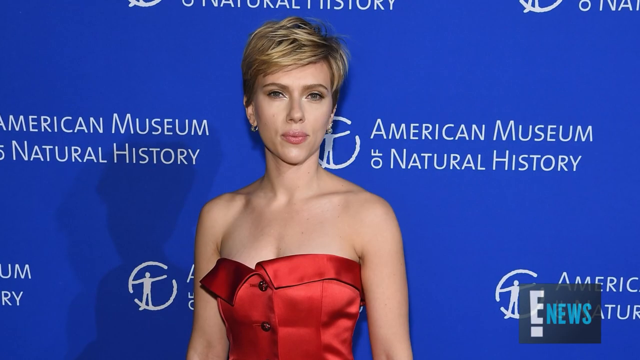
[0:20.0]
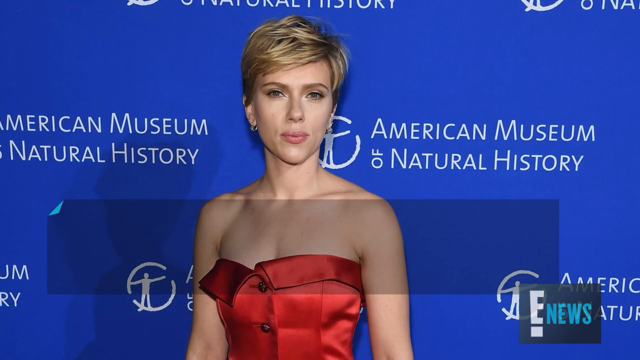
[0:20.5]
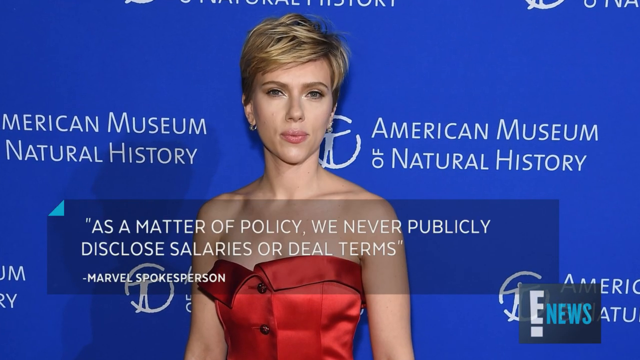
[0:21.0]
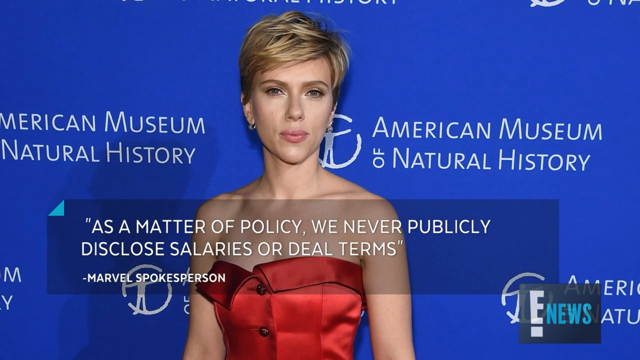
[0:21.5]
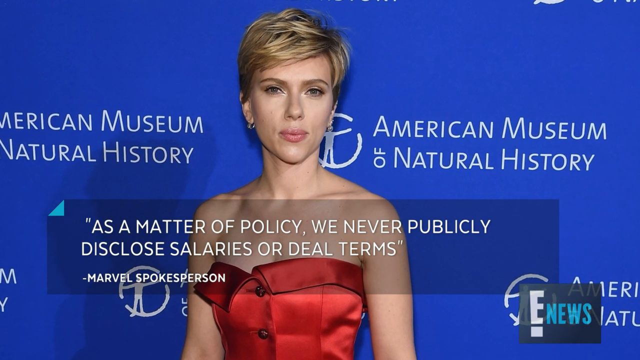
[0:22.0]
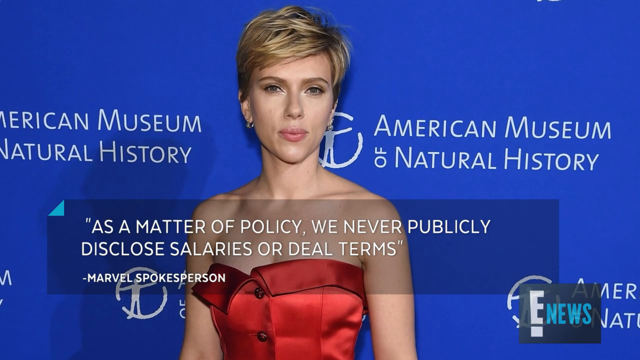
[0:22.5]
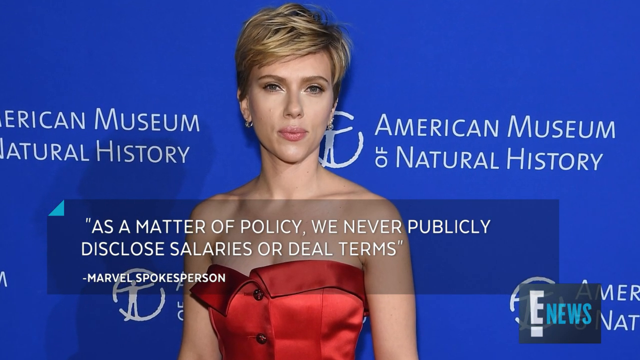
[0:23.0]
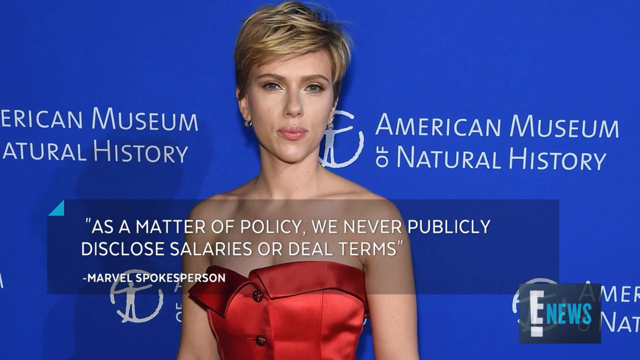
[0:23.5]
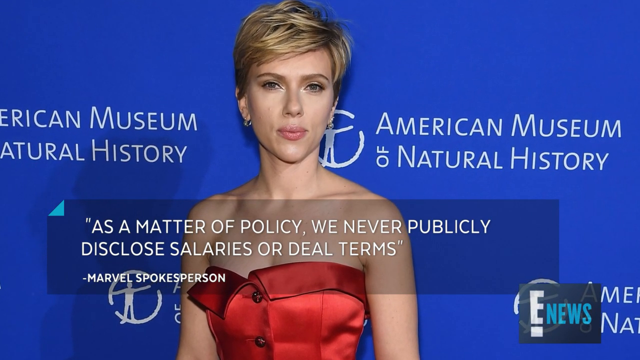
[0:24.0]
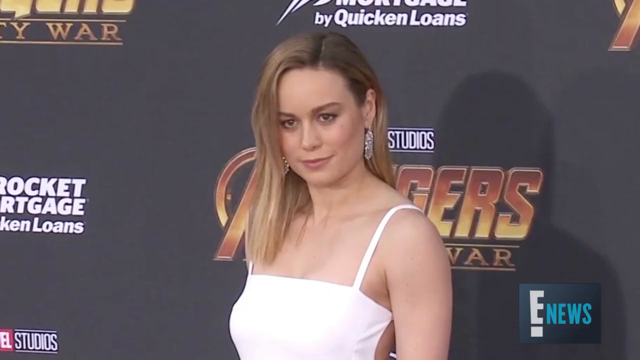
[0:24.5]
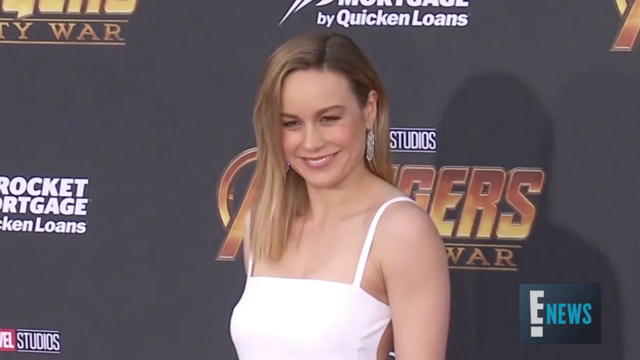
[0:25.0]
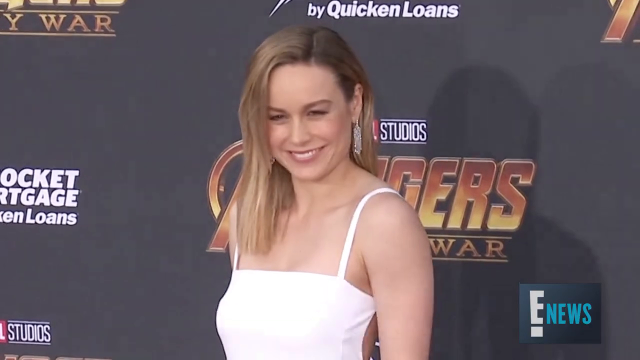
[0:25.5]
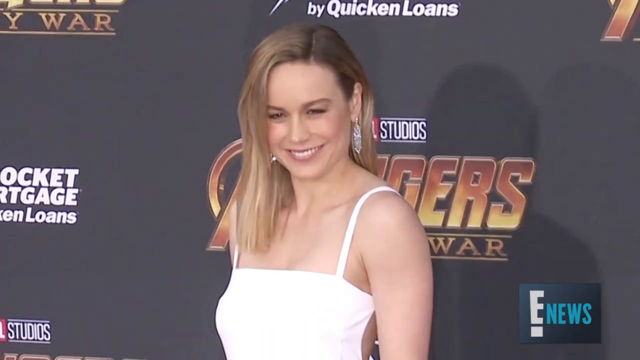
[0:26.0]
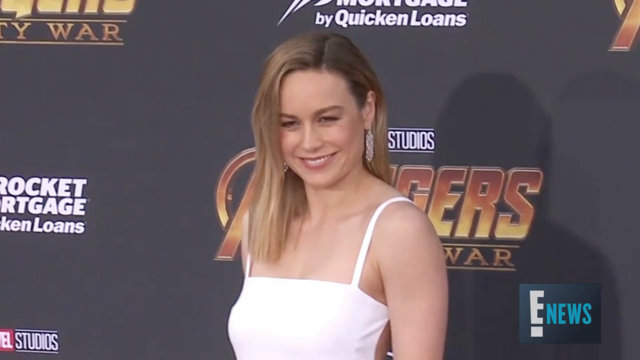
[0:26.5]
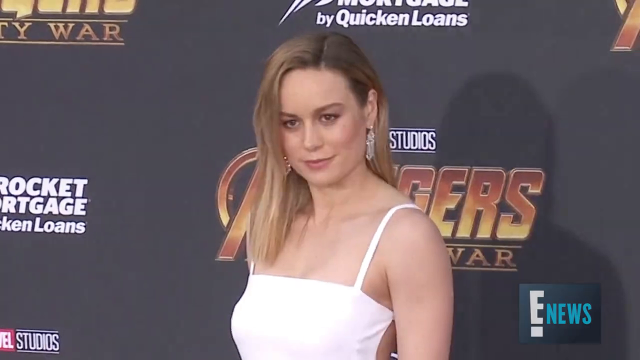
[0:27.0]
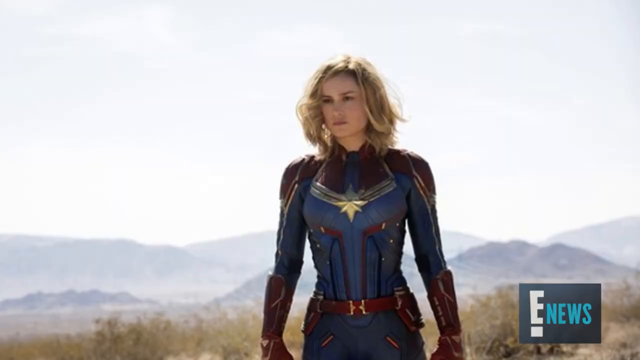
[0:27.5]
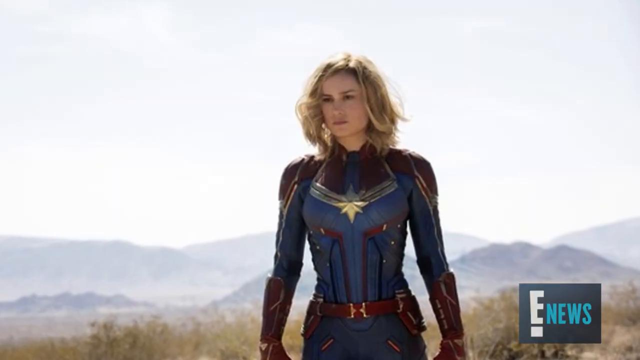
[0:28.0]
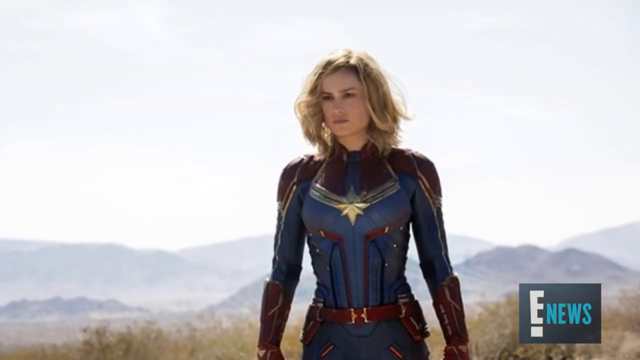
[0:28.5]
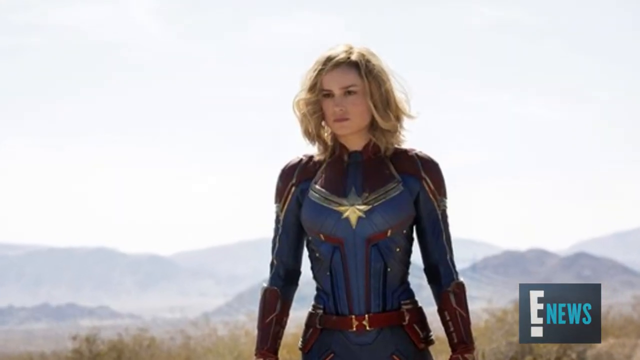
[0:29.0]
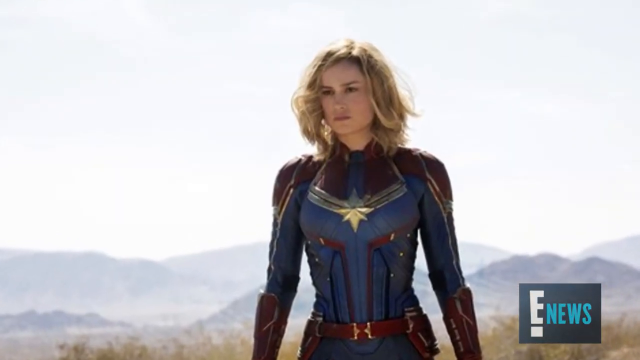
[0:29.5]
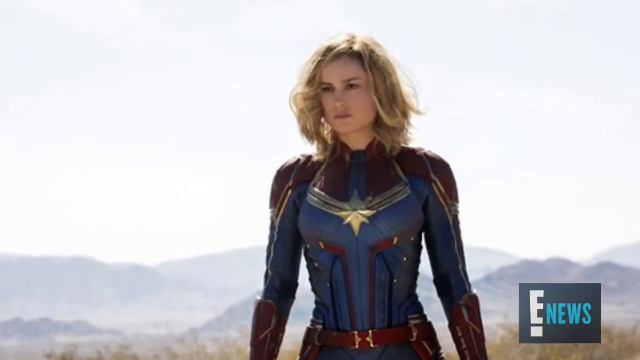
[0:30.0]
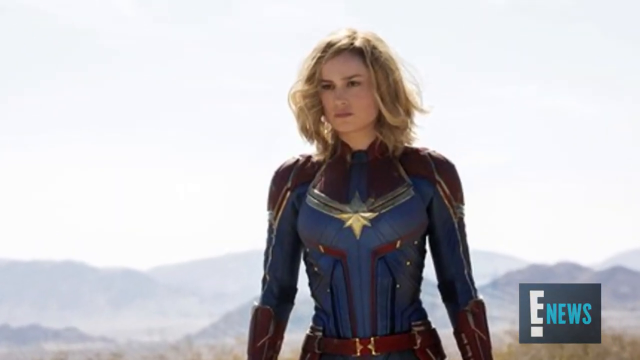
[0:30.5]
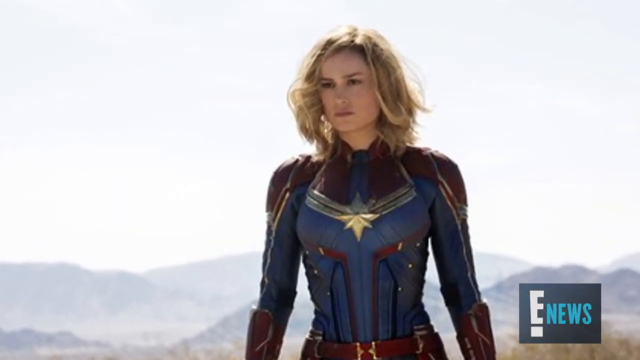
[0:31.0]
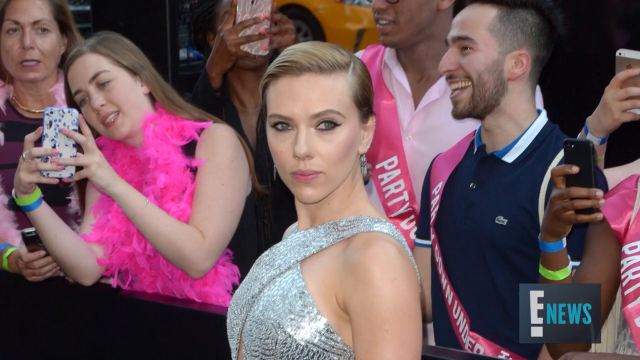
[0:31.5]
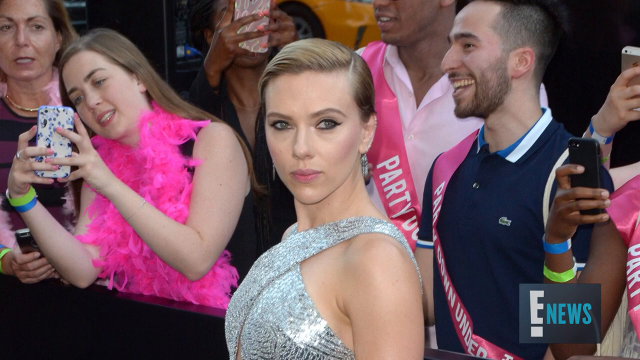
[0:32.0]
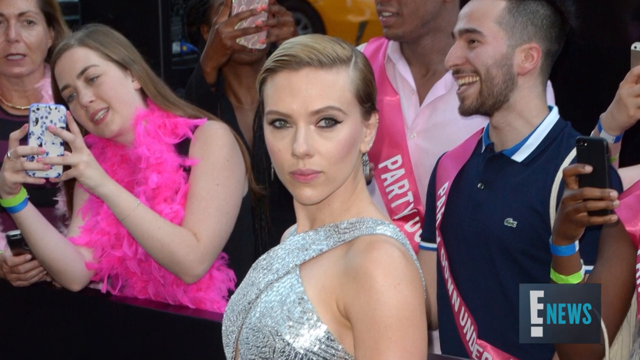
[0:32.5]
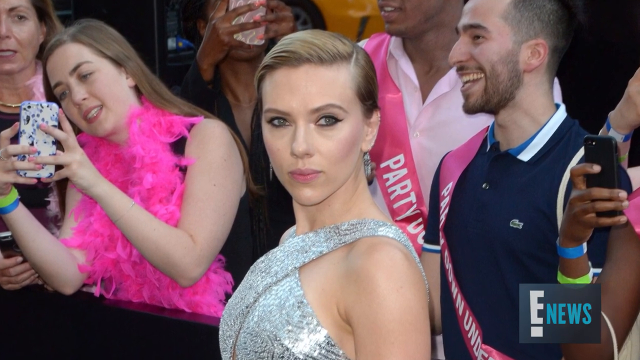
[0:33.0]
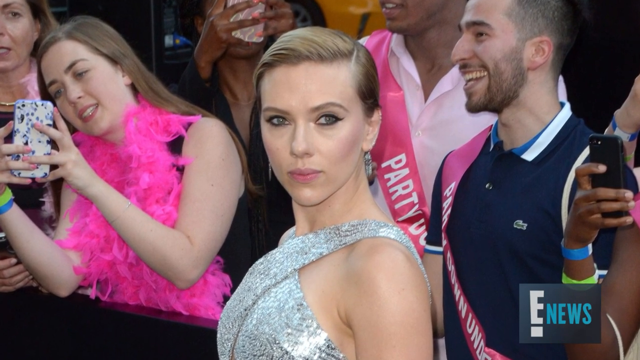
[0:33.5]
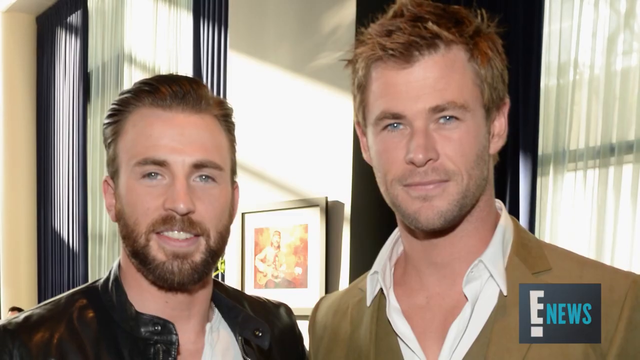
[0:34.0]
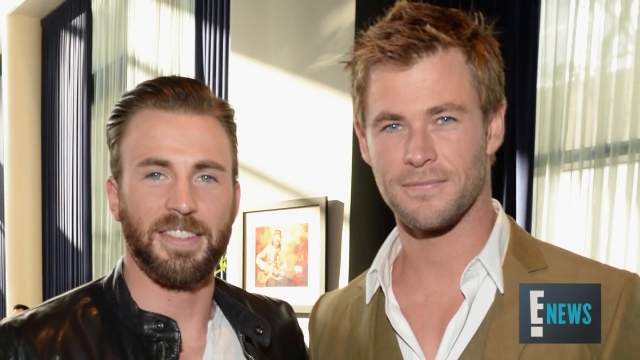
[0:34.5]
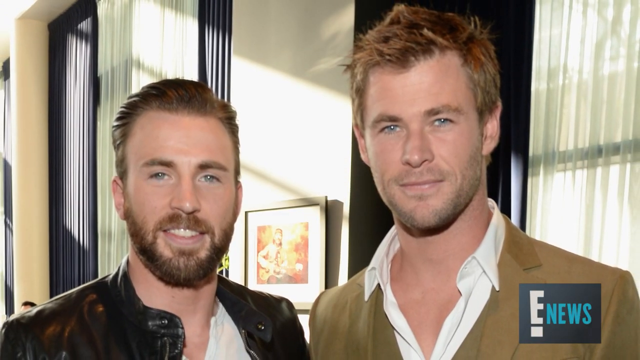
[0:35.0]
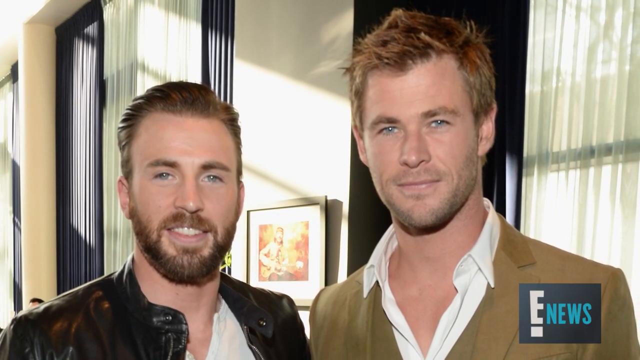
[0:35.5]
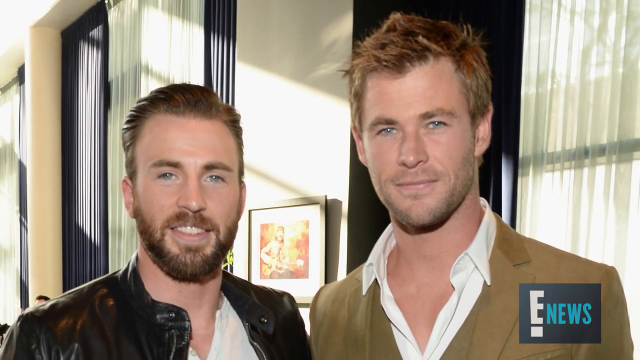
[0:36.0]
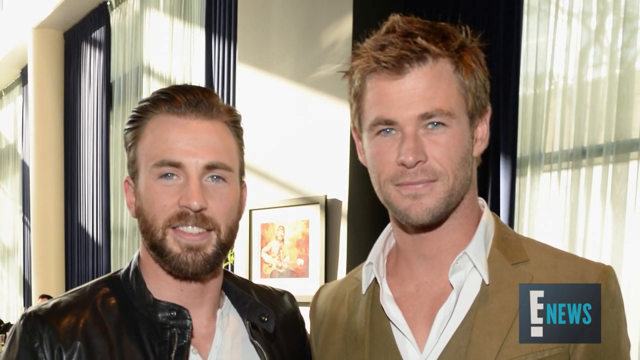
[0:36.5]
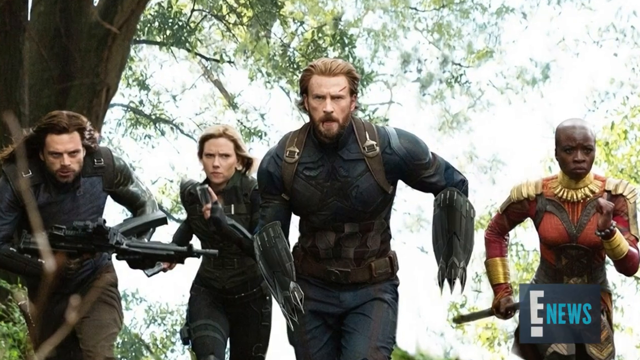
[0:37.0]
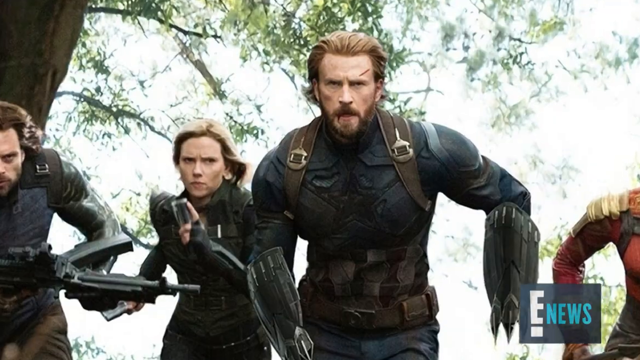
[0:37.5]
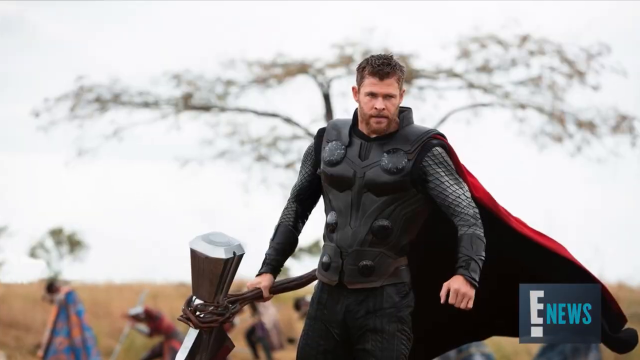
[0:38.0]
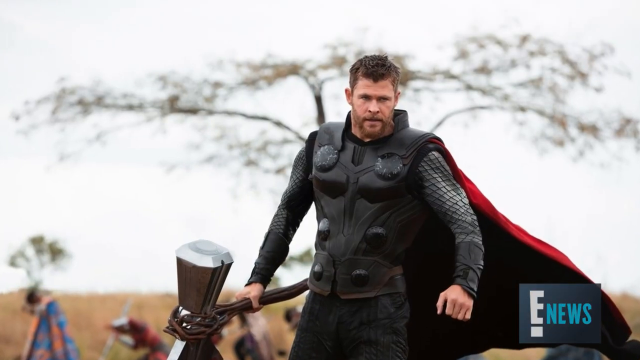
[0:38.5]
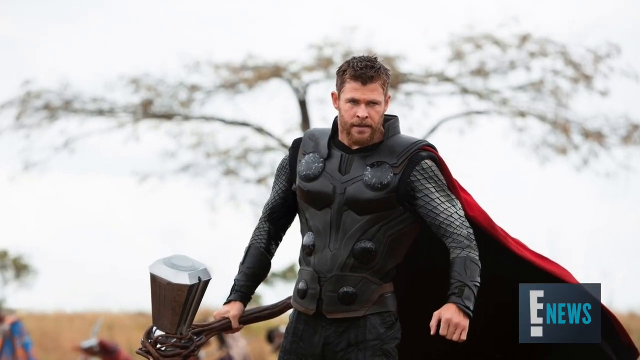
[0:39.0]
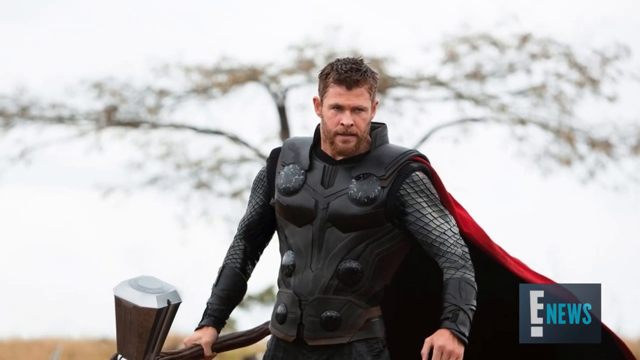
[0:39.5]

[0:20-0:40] A still image shows Scarlett Johansson with short blonde hair and hooped earrings, facing the camera with a serious look. She wears a red dress that fits underneath her arms and is in front of a blue background with text reading "American Museum of Natural History". A pop-up window appears with the quote "as a matter of policy, we never publicly disclose salaries or deal terms", attributed to a Marvel spokesperson. The image changes to a blonde woman in a white top with shoulder-length hair tucked behind her left ear, smiling and wearing long, sparkly earrings. Another still shot follows and zooms in: a woman with slightly messy, shoulder-length blonde hair wears a blue and red uniform with a star emblem on the front of her chest. Next, a still shot shows a blonde woman looking over her left shoulder toward a camera, wearing a sparkly silver dress with straps crossed over her shoulders. Multiple people are in the background, some holding up cameras and taking pictures, and an E-News logo is in the bottom right-hand corner of the screen. The image then changes to two men: the one on the left has a longer beard and slicked-back hair and smiles with visible teeth, while the one on the right has short, spiked-up hair and smiles with his mouth closed. Next is an action shot of four people running toward a camera. Then there is an image of Thor holding a hammer.